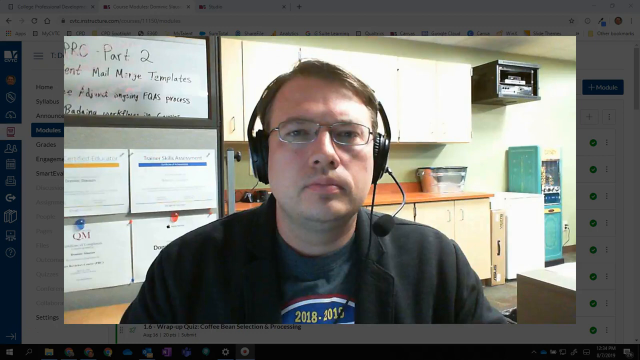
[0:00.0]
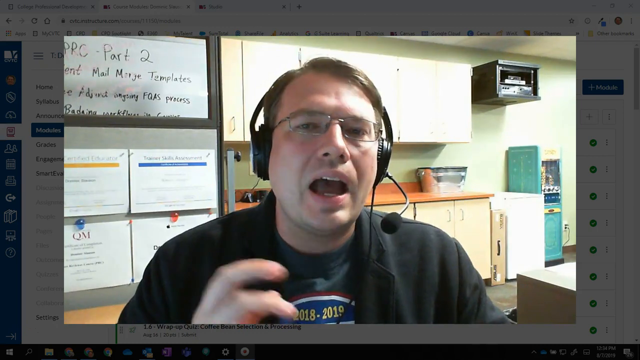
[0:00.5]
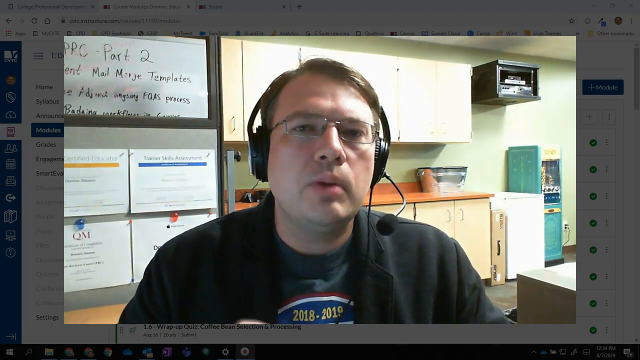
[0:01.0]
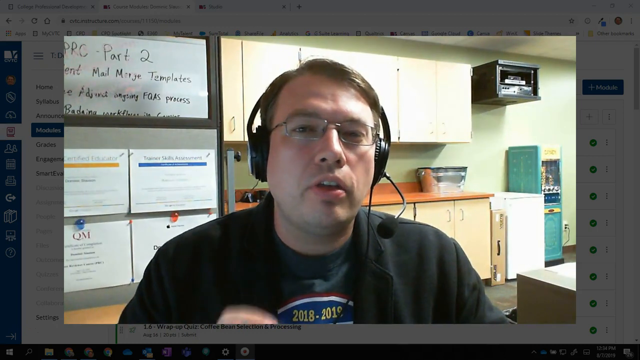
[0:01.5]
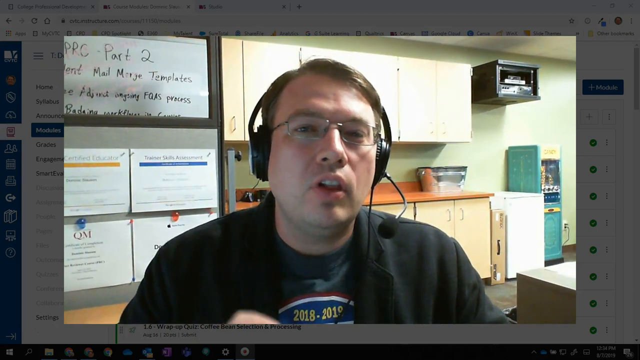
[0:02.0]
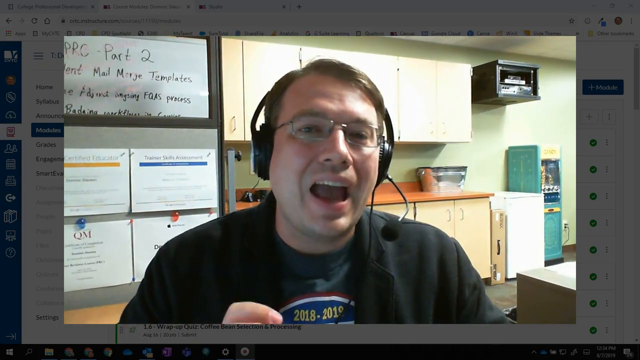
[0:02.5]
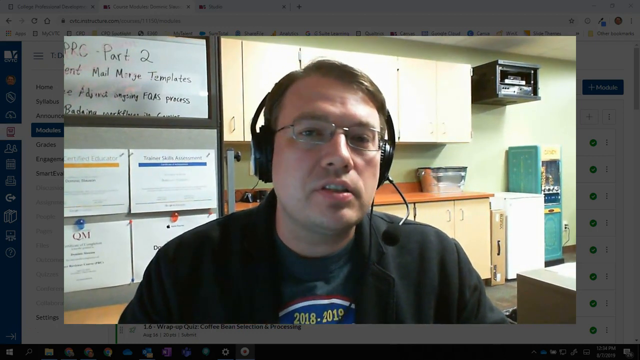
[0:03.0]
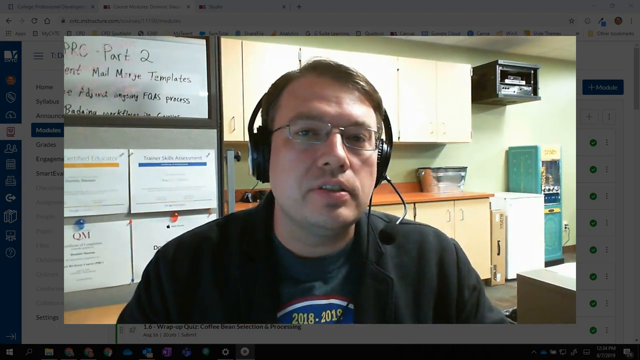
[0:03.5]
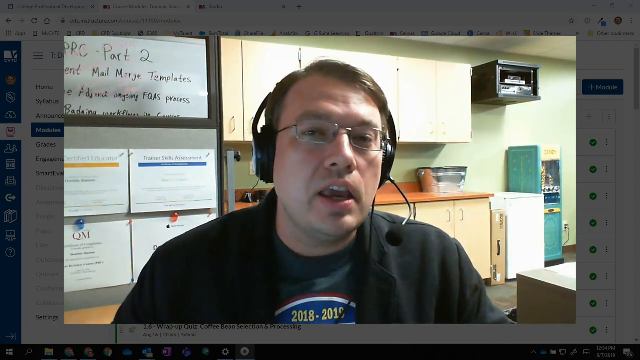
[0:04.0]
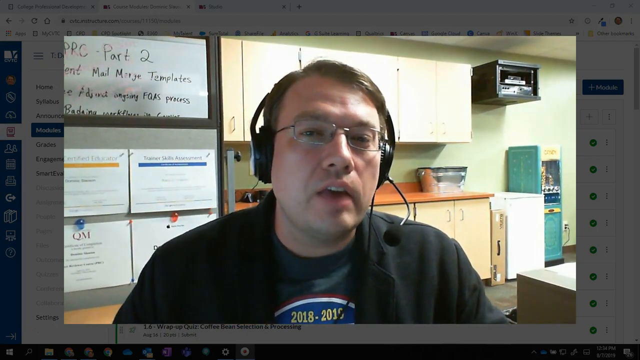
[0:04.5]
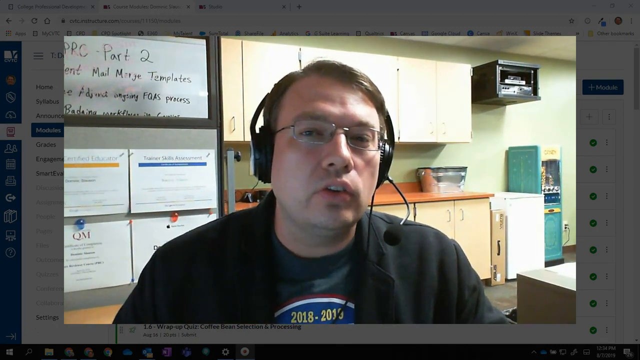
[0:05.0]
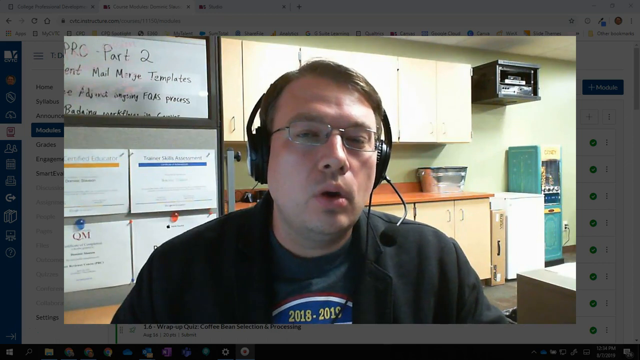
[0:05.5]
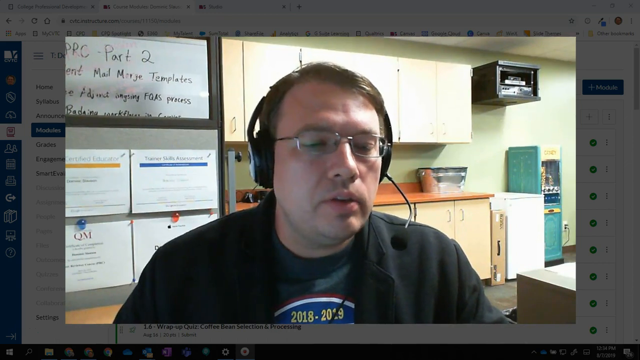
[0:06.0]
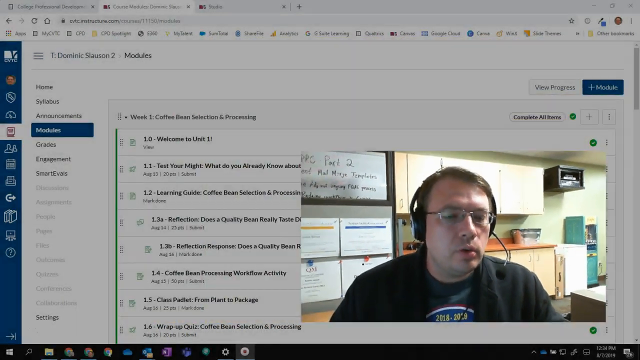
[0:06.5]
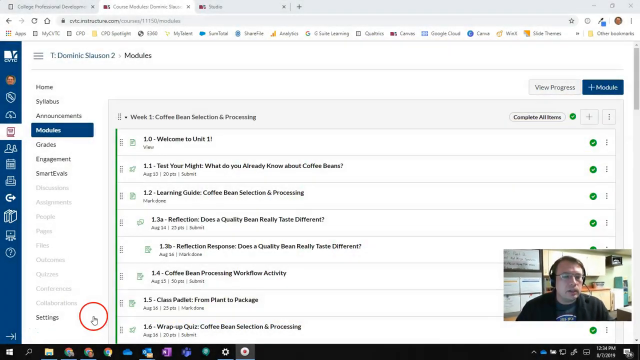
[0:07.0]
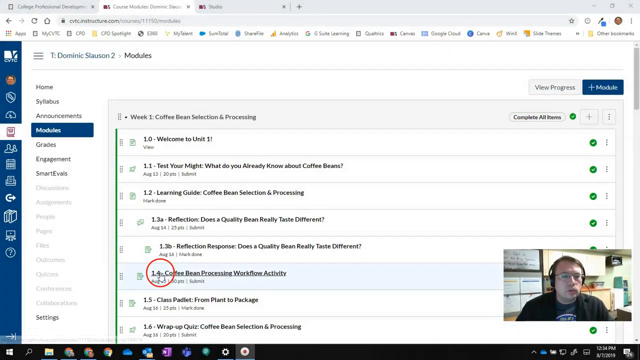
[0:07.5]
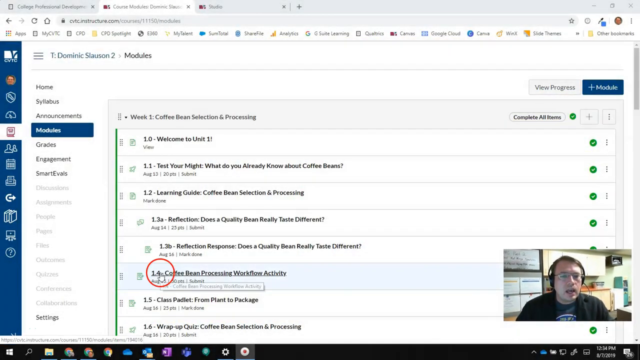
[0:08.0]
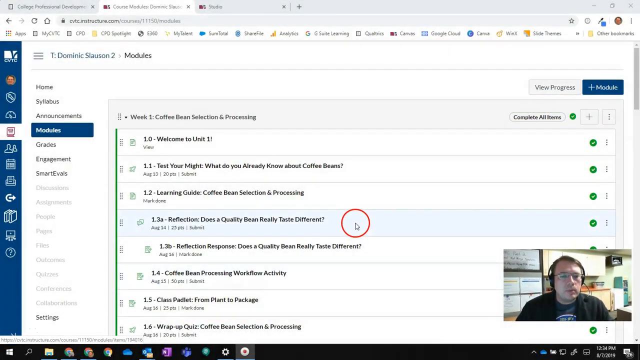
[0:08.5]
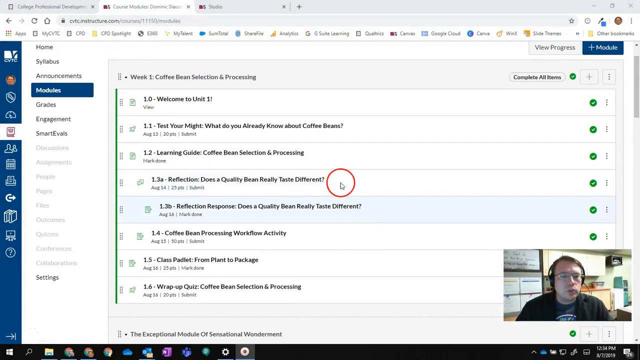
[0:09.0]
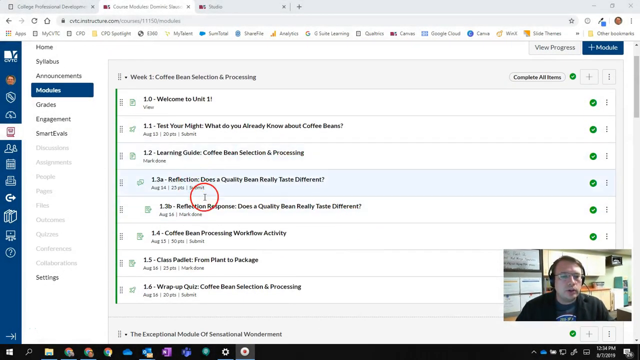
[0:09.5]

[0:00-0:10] A man is at his desk; he is possibly a social media influencer. In the background is a small kitchen with a fridge and a cupboard, and on the other side there is a board, possibly for his work notes. He wears headphones, a black blazer, a black t-shirt and glasses, and looks toward the camera as he records the video. He opens his PC and shows it on the screen; it is on a page with questions, and he highlights parts of it. He seems to be an online tutor, though the subject is unclear.